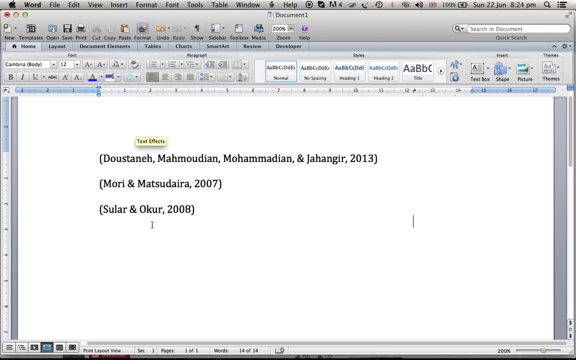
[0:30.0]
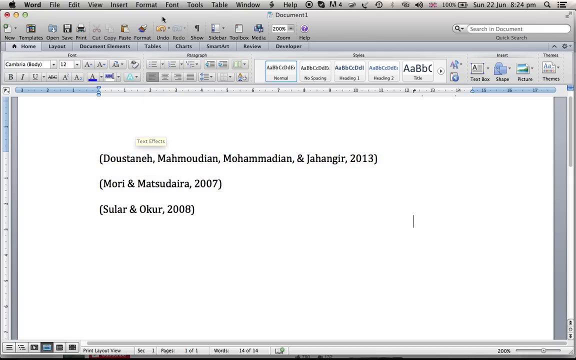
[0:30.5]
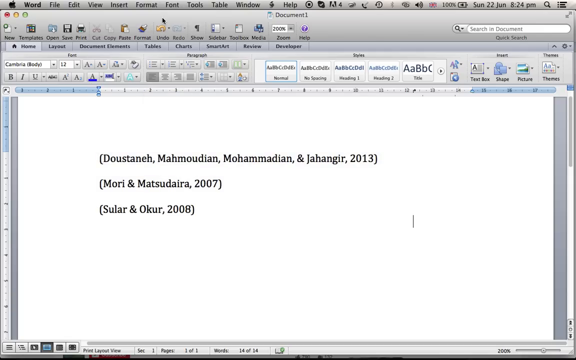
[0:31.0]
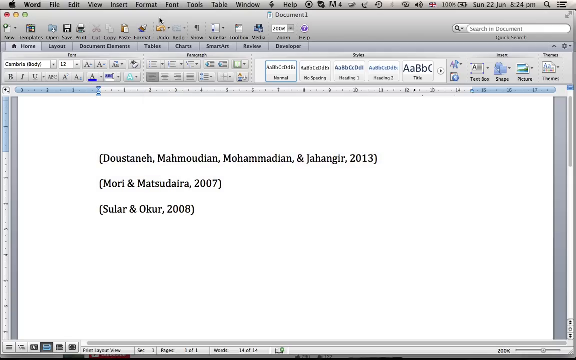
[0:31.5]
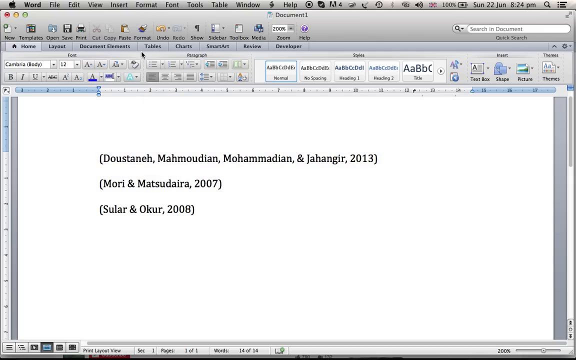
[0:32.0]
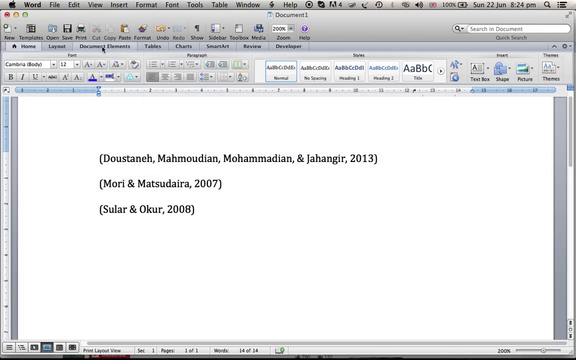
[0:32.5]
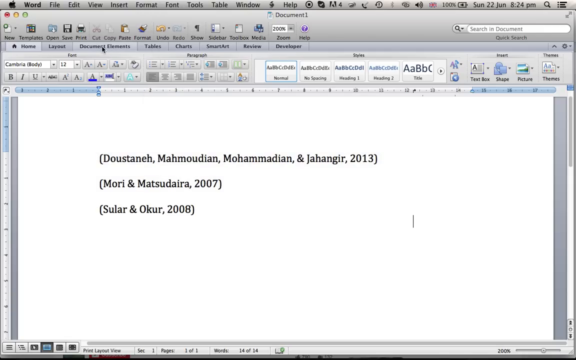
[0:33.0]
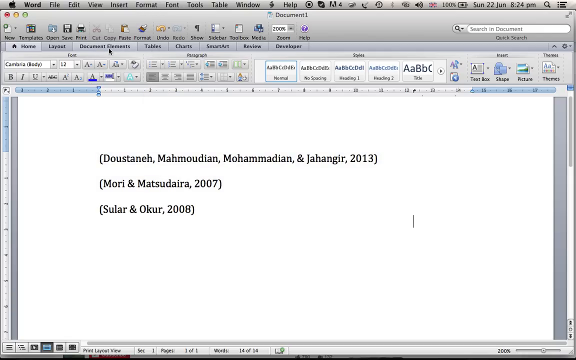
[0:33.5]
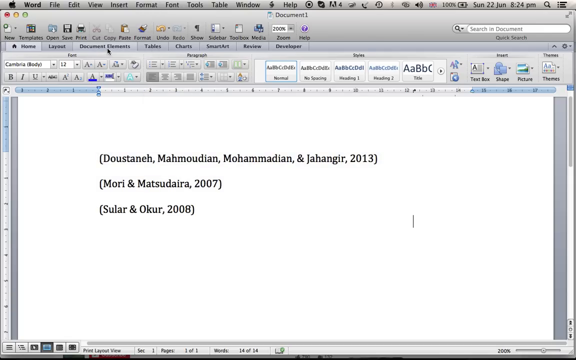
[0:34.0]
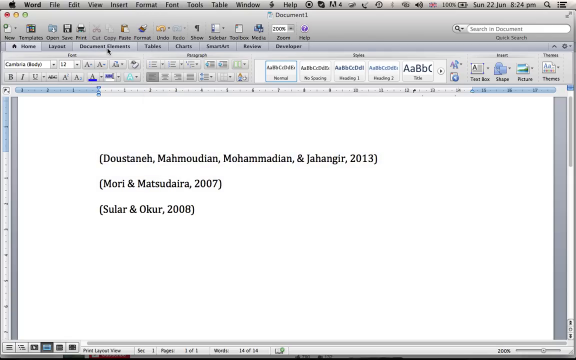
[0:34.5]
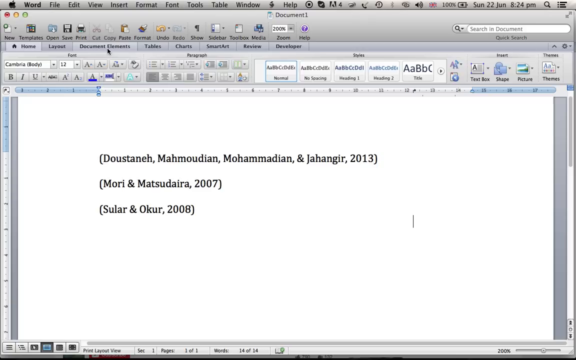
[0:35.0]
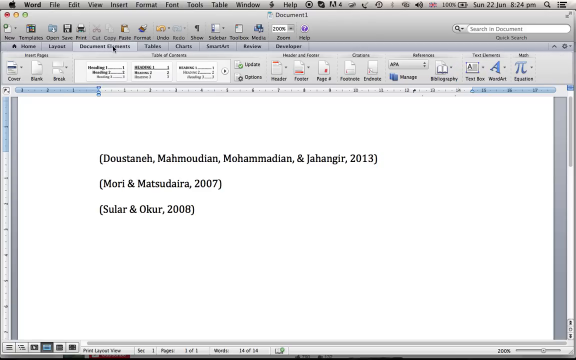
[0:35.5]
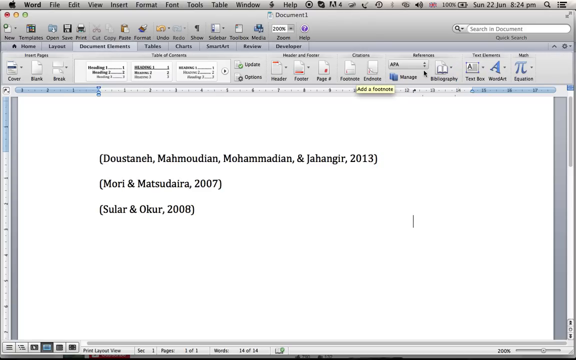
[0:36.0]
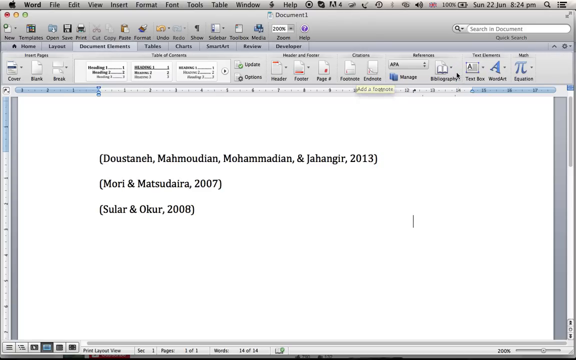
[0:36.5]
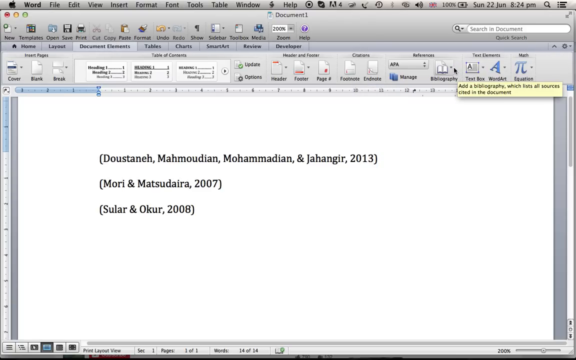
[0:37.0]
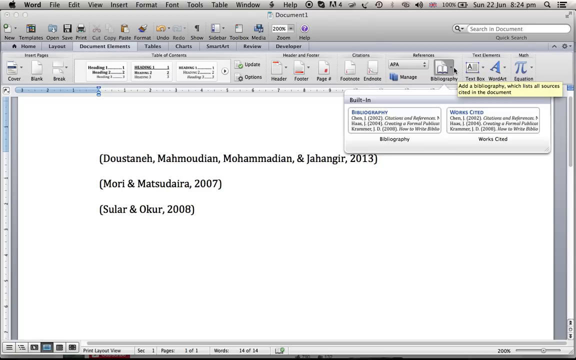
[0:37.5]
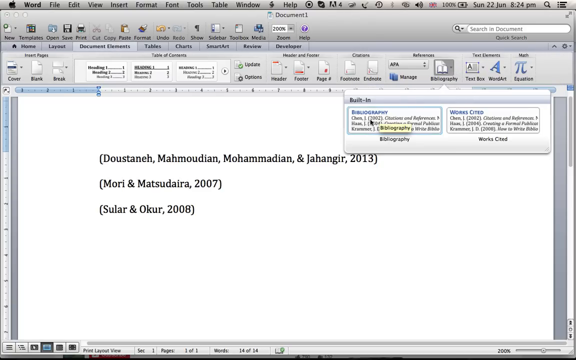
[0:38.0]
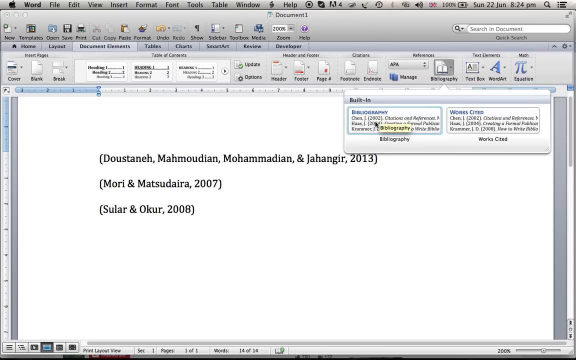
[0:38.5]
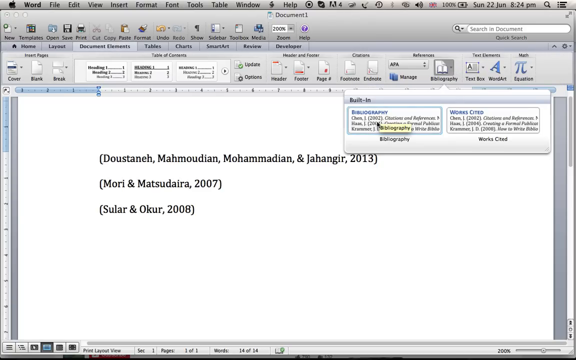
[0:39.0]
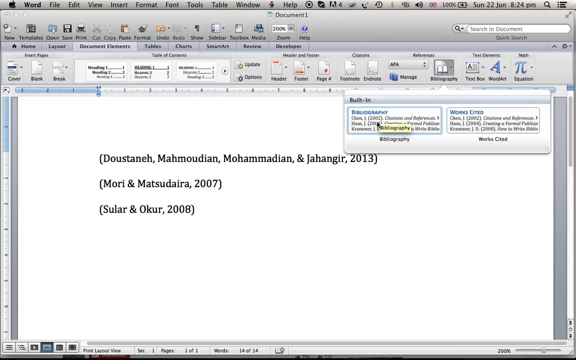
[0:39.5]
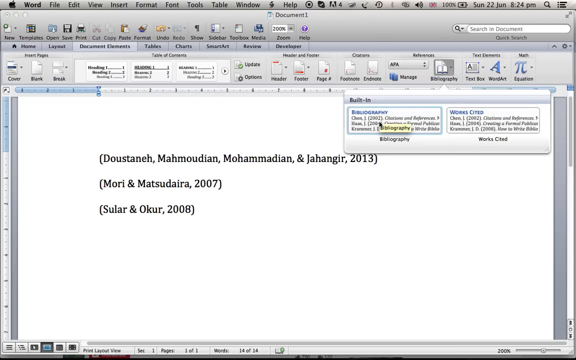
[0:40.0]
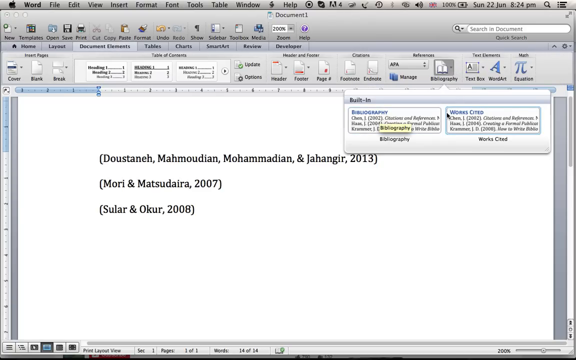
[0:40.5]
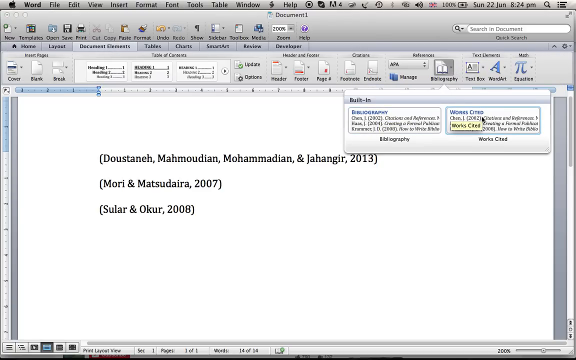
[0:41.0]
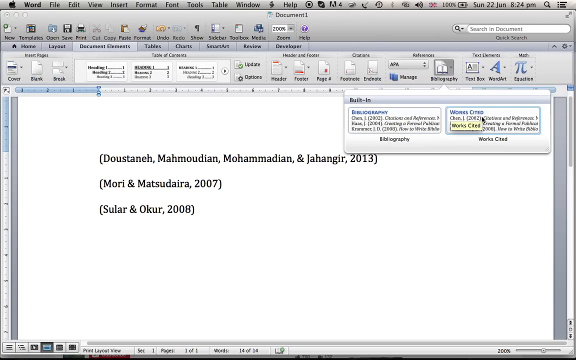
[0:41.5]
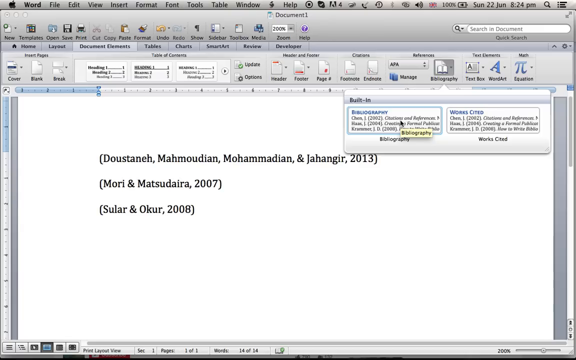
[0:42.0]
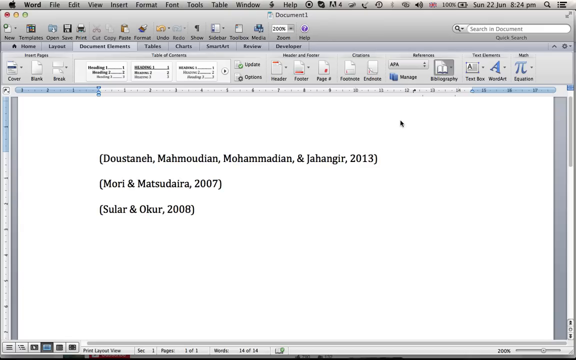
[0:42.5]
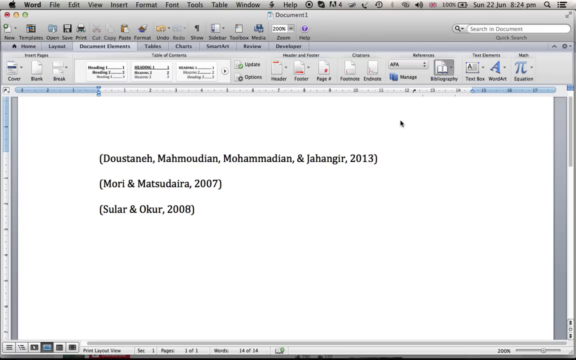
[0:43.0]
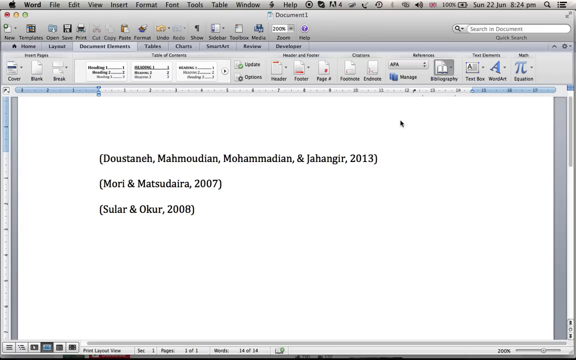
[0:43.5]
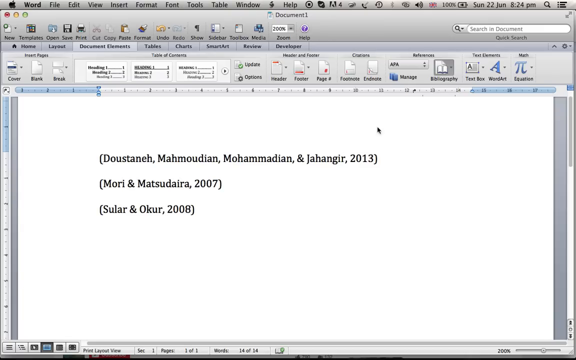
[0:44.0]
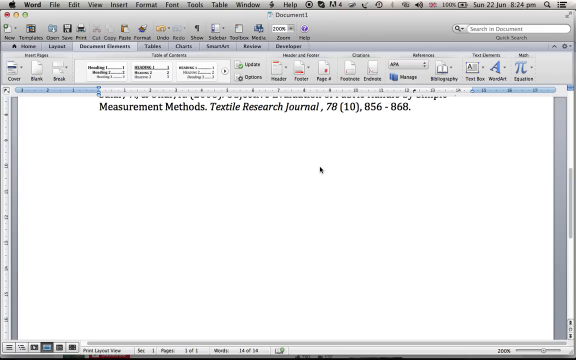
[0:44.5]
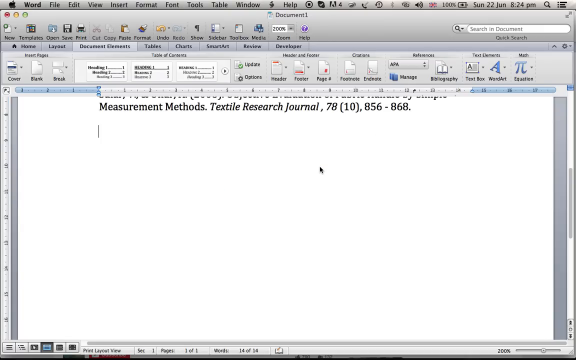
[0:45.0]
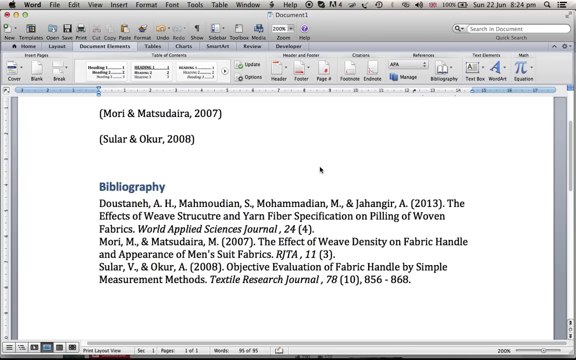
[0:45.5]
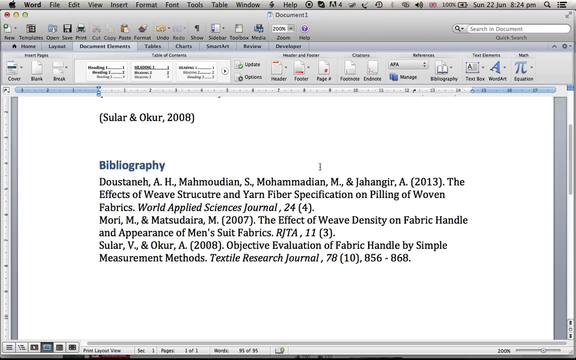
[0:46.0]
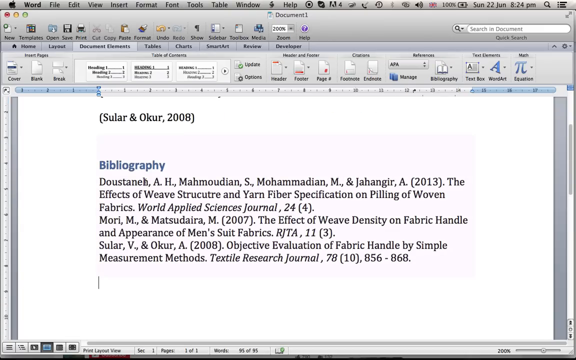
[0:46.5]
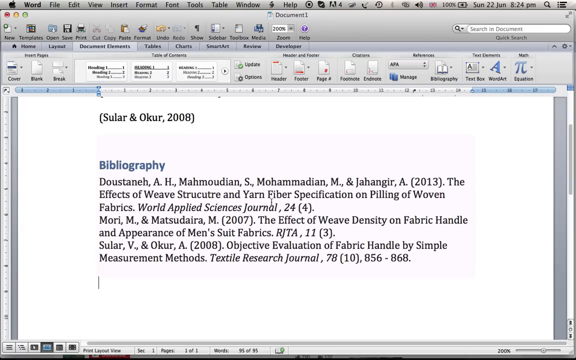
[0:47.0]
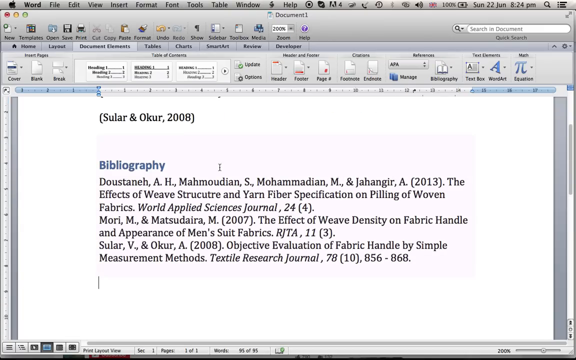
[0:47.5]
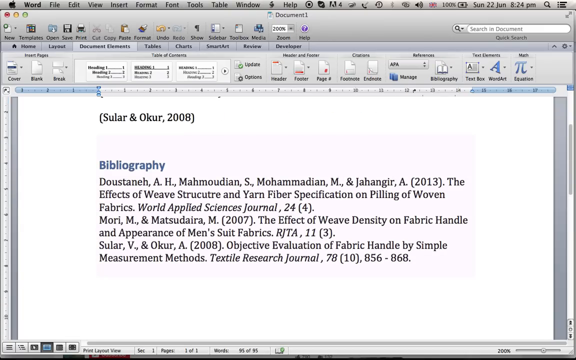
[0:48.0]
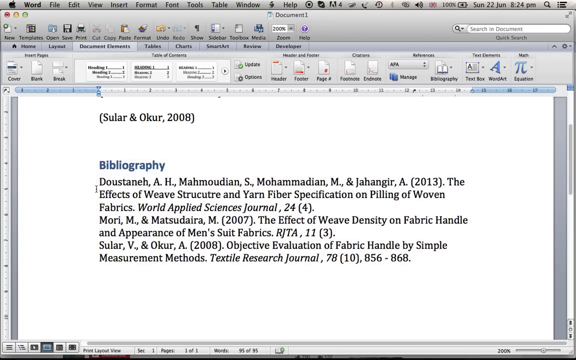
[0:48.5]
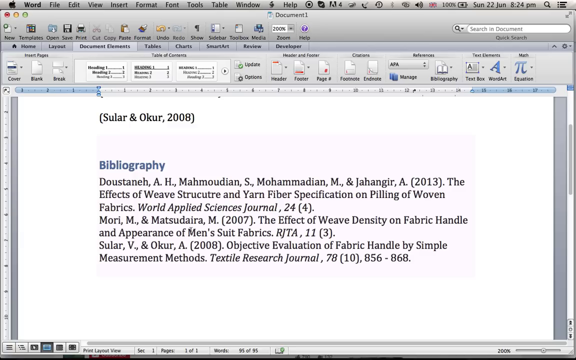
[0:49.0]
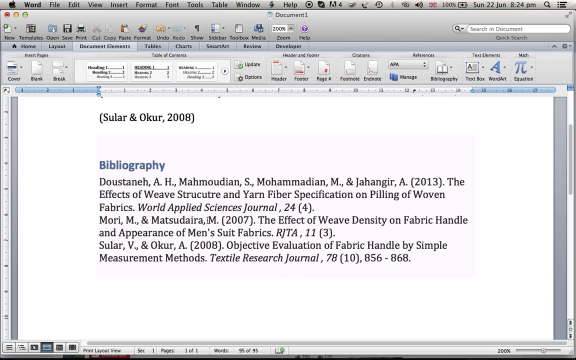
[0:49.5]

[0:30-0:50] A text effect appears in yellow. The person goes to Document Elements, then to Building, and Bibliography and Works Cited appear. The box that opens has two parts, Works Cited and Bibliography. The person takes the citations and turns them into a bibliography, which starts with the letter D and is put in alphabetical order. The person seems to be demonstrating how to turn citations into a bibliography.